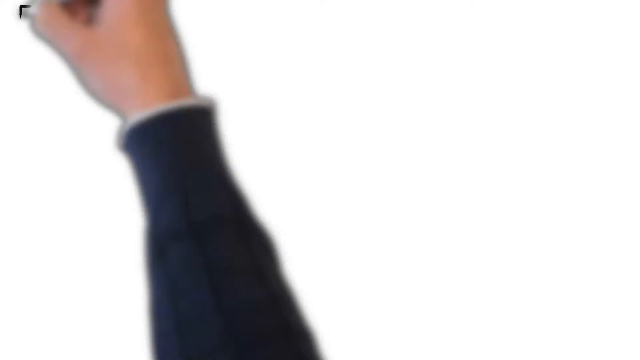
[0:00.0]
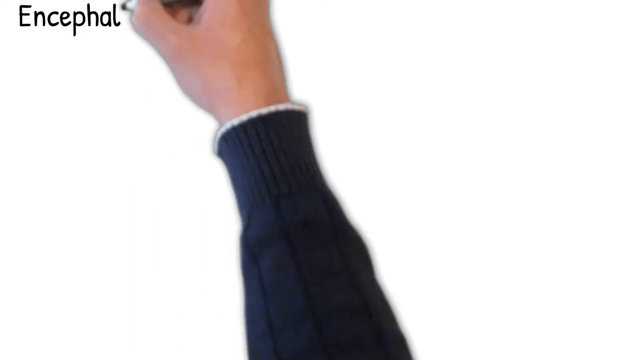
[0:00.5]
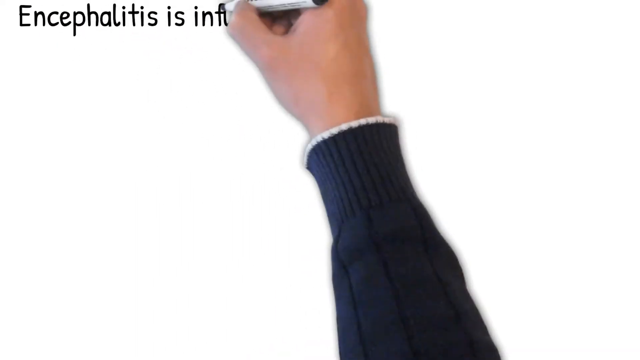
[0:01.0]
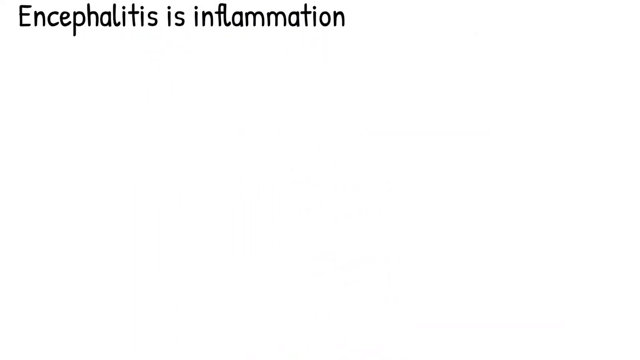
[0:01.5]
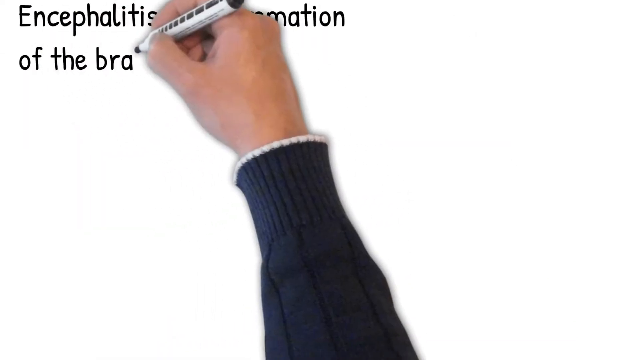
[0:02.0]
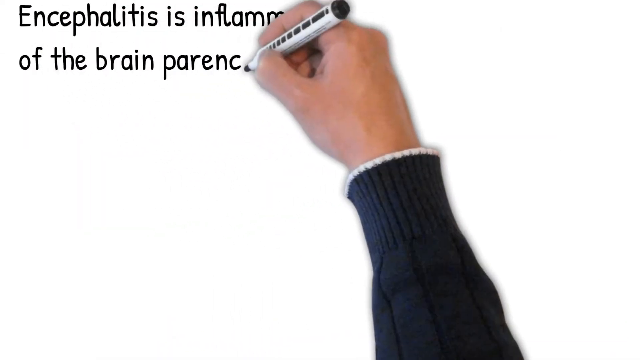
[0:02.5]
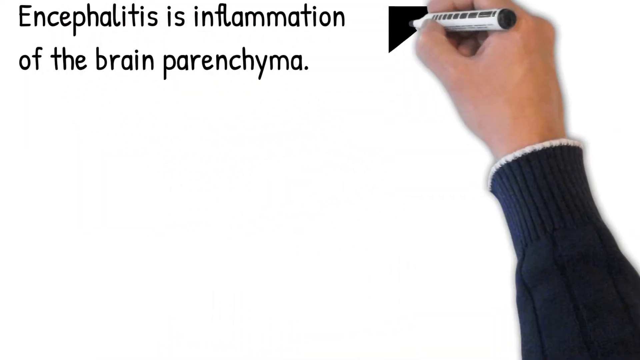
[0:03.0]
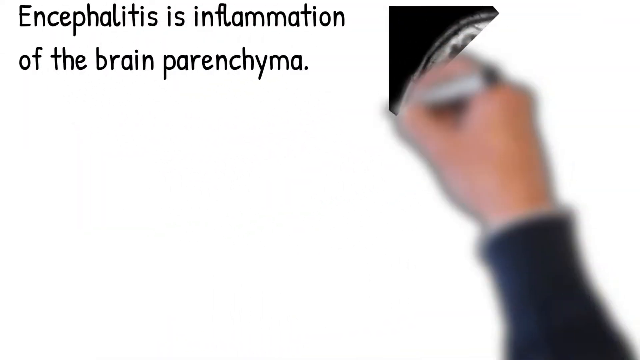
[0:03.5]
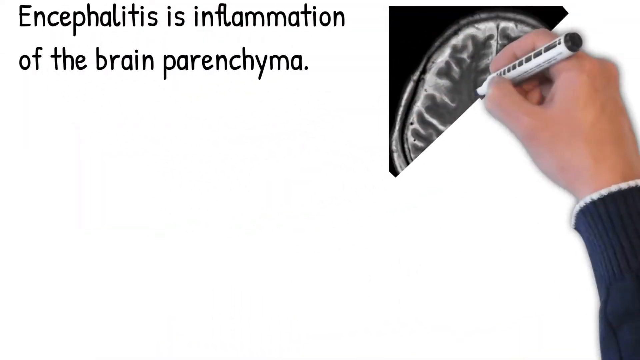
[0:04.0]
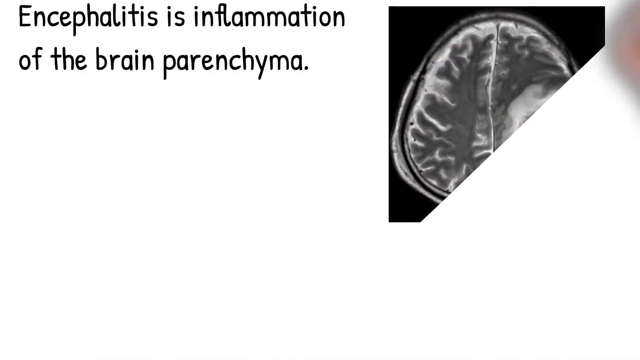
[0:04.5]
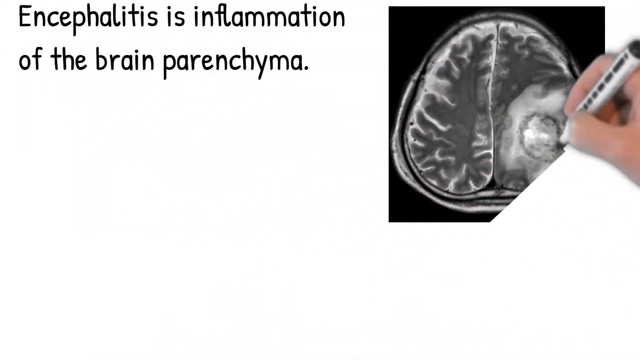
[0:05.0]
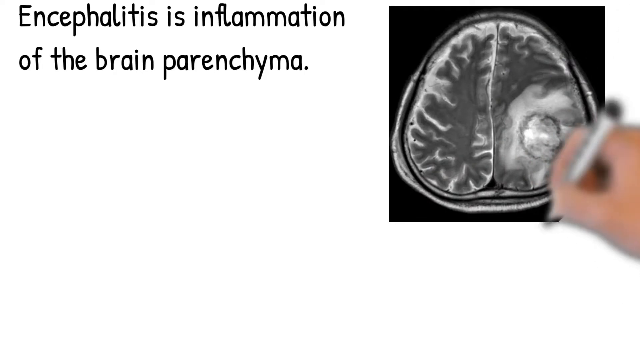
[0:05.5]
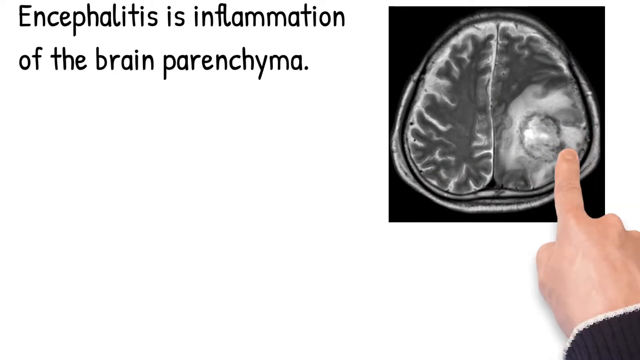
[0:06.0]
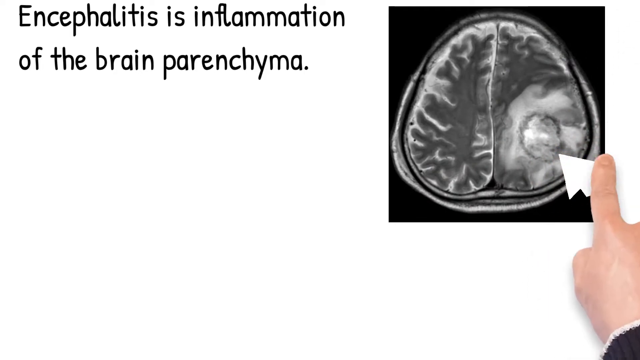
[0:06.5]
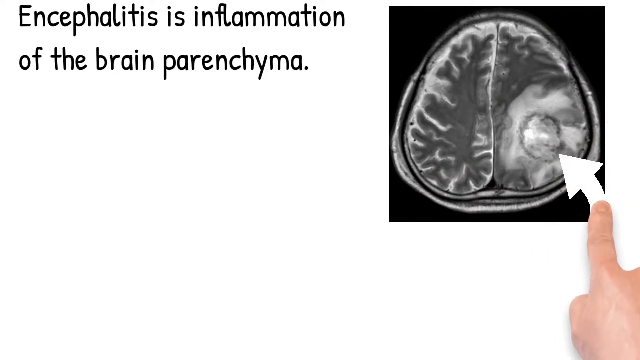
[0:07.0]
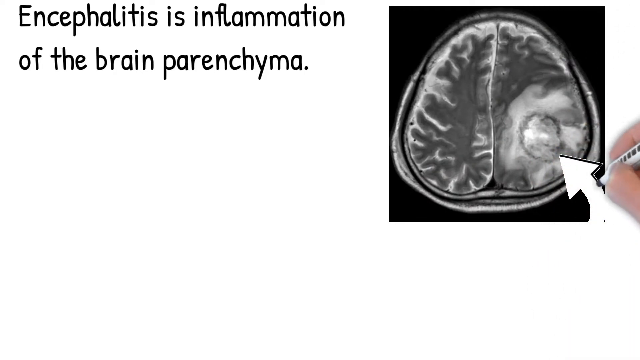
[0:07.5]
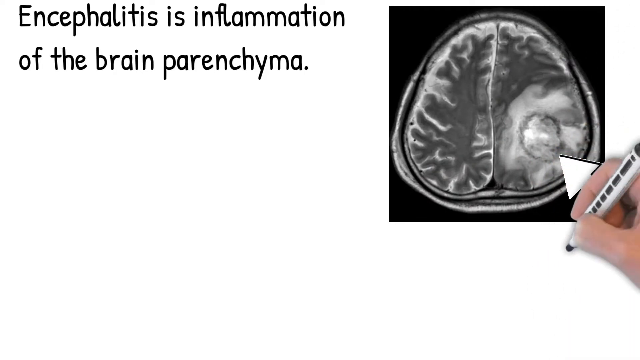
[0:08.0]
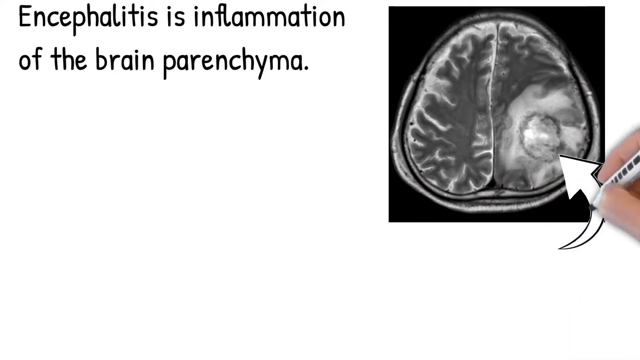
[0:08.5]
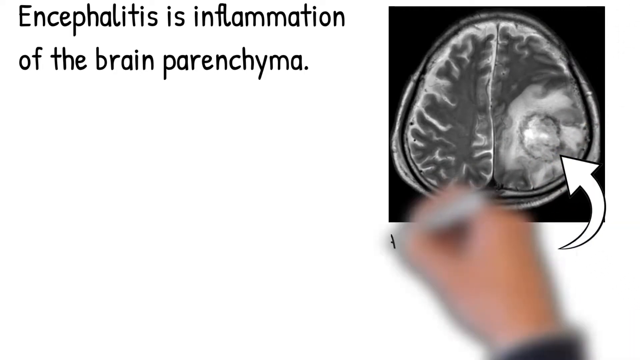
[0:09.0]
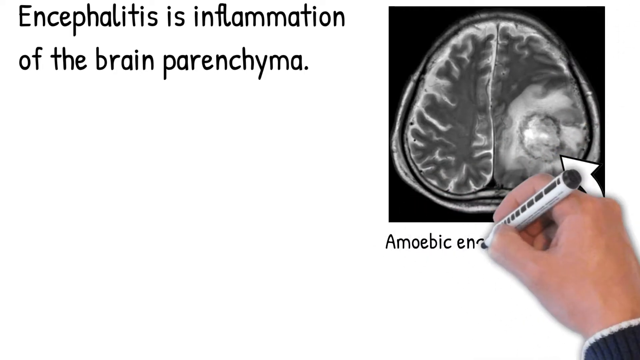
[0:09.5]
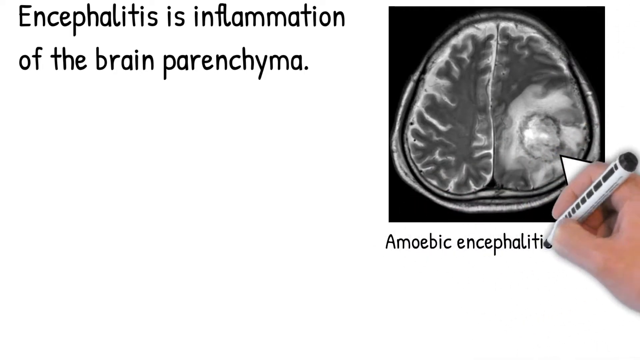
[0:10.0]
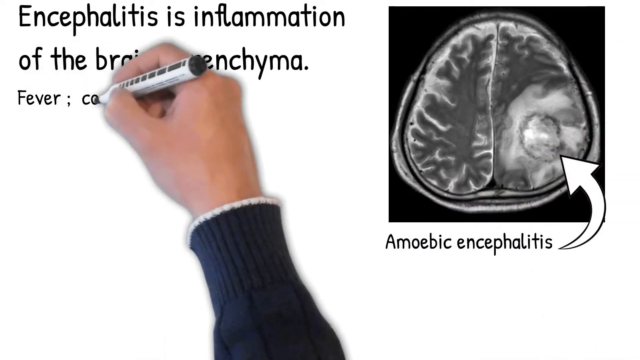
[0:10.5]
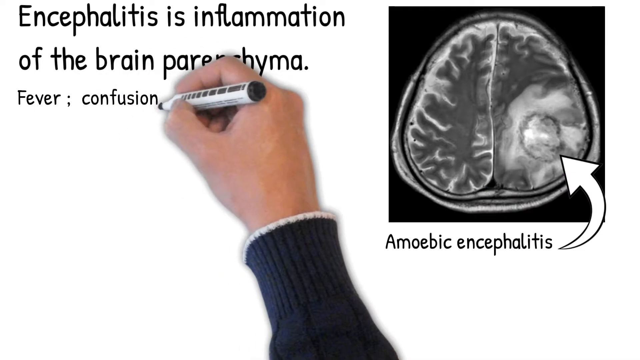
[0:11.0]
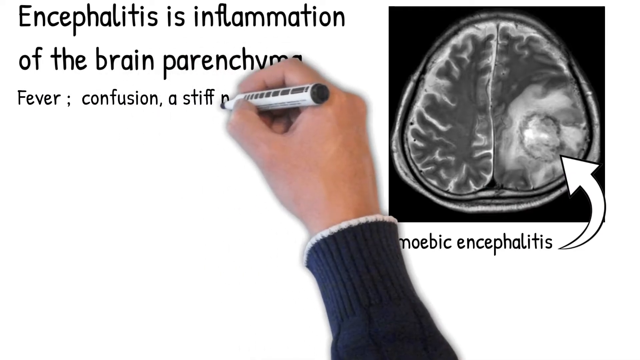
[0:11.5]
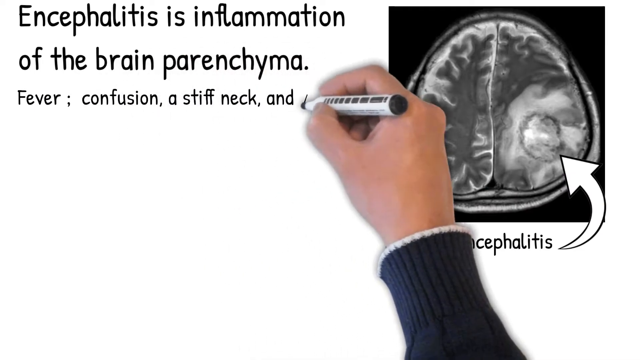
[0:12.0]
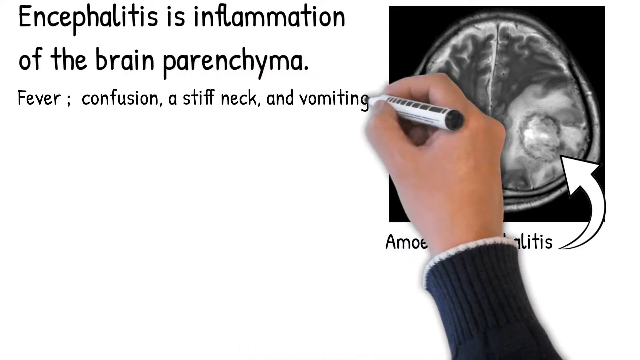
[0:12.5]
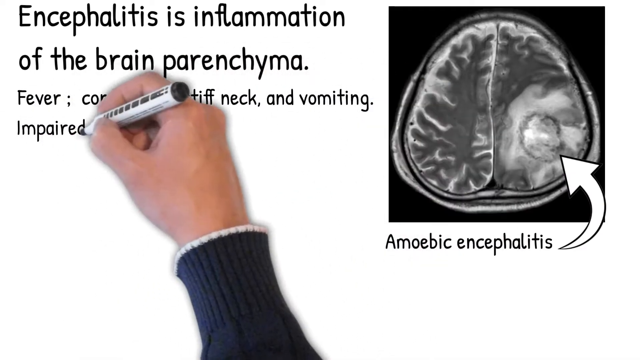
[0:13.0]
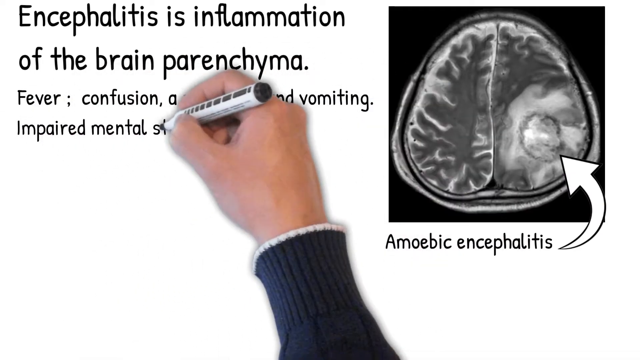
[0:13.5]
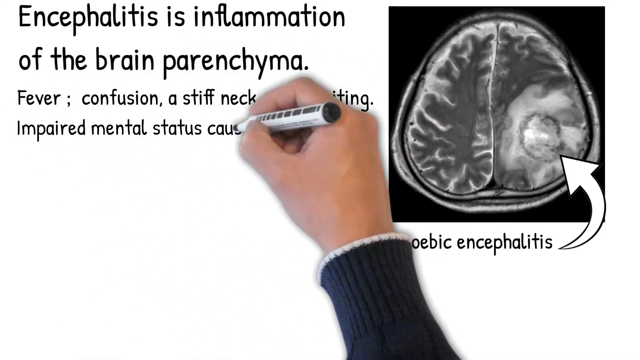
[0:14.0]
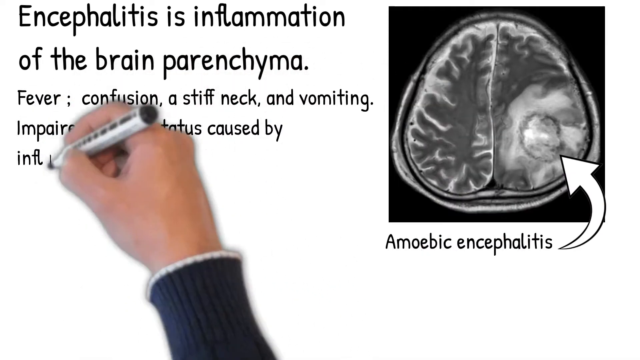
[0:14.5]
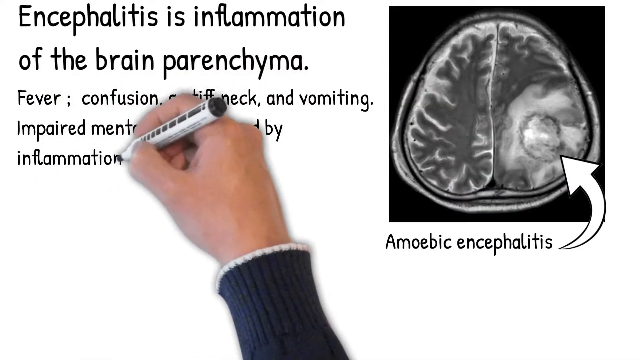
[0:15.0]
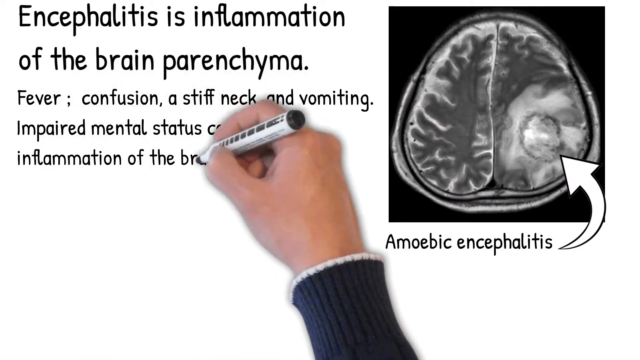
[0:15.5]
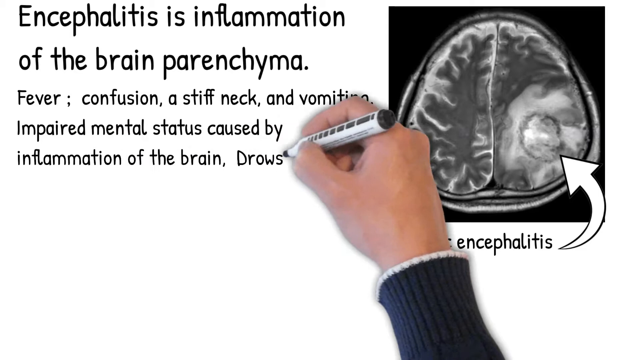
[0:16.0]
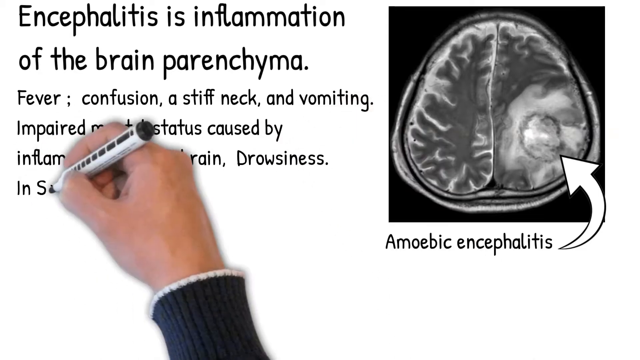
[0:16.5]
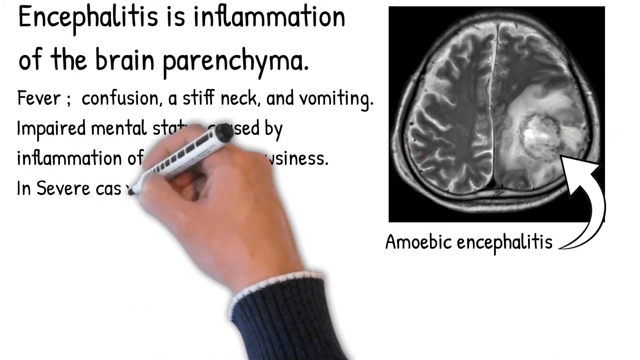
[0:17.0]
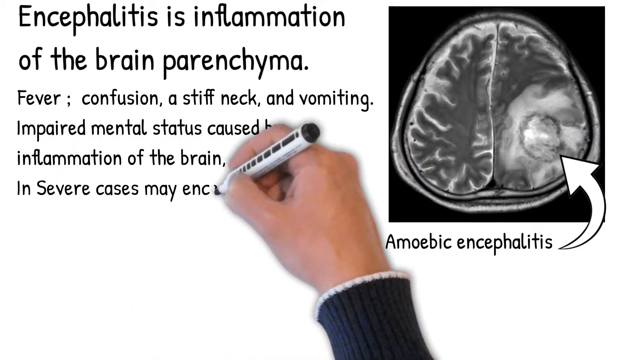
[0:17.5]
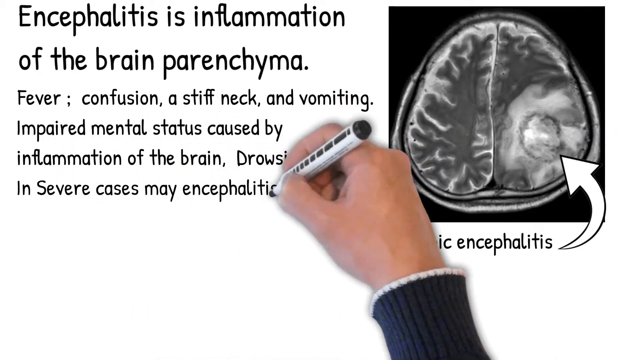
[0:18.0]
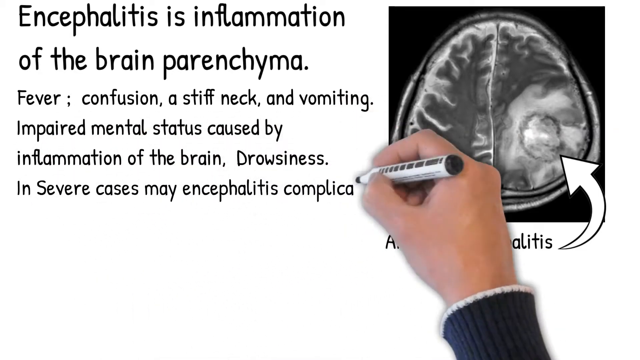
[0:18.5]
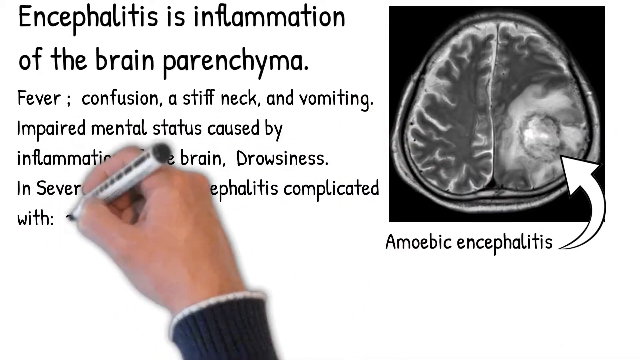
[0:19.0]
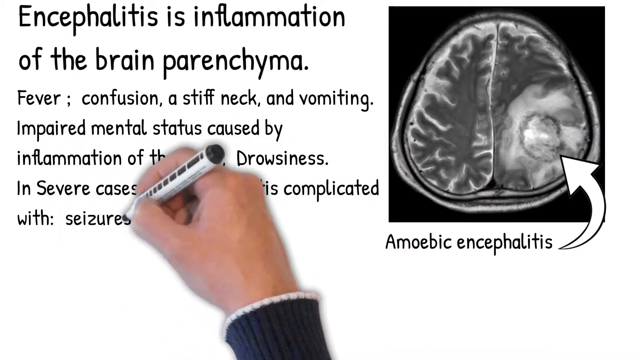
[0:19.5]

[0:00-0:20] A hand writes on a whiteboard in black marker: "encephalitis is inflammation of the brain parenchyma". The pen then sketches a picture that looks like an MRI, showing the brain from the top of the head. The left side looks normal; on the right side the top part looks normal, while the bottom part looks like a big white cloud. An arrow is drawn pointing to that white cloud, labeled "amoebic encephalitis". Further writing notes that encephalitis can cause fever, confusion, a stiff neck and vomiting because of inflammation of the brain, as well as impaired mental status and, in severe cases, drowsiness.